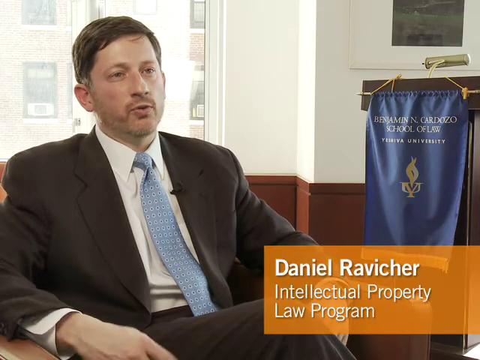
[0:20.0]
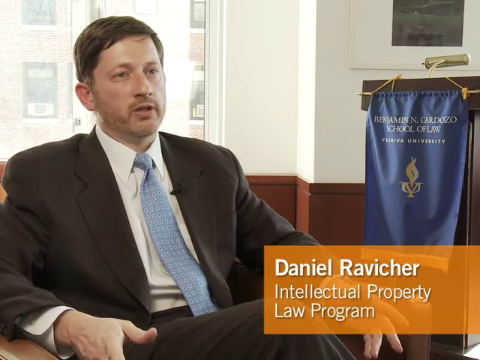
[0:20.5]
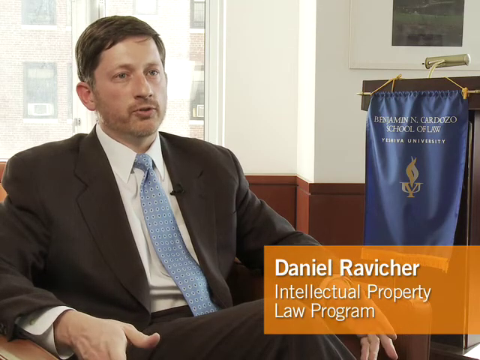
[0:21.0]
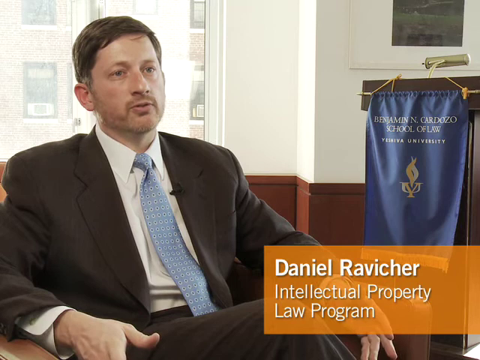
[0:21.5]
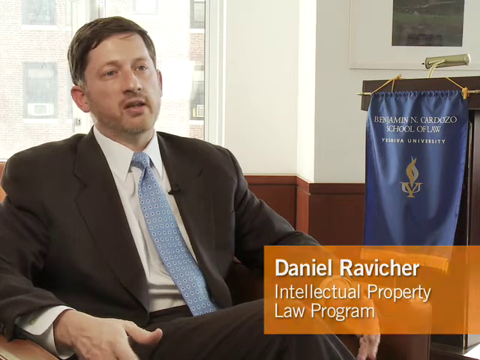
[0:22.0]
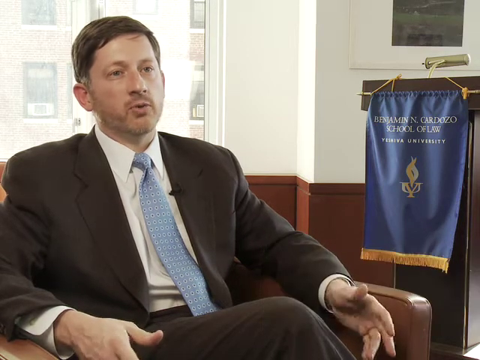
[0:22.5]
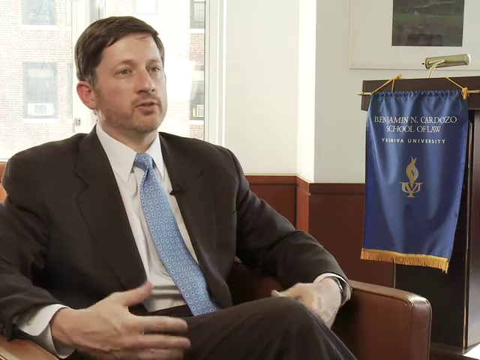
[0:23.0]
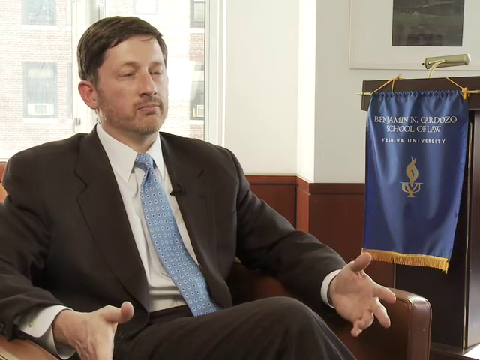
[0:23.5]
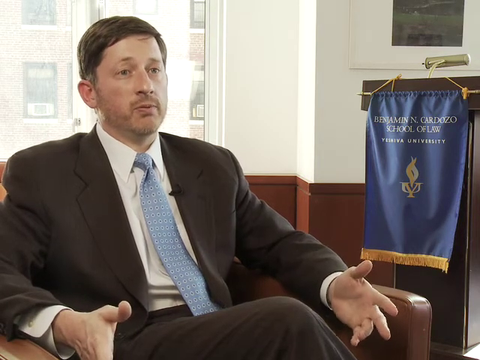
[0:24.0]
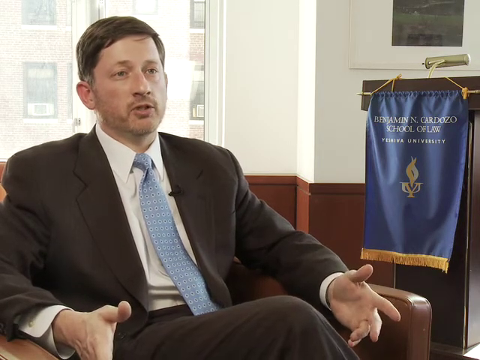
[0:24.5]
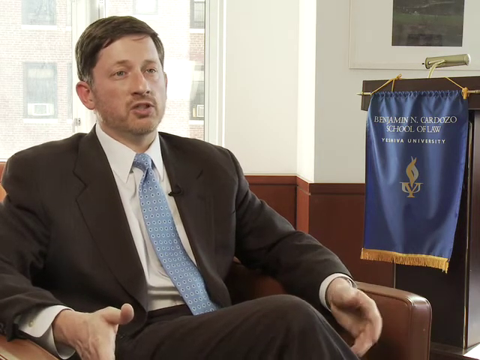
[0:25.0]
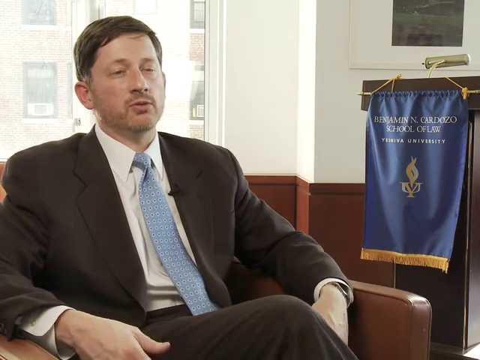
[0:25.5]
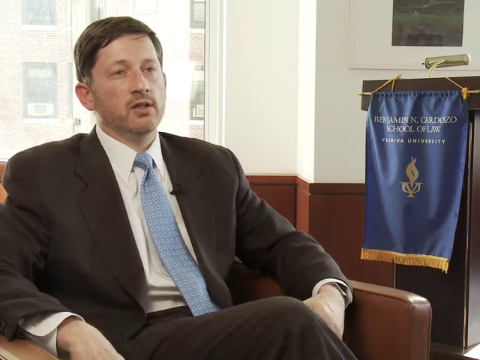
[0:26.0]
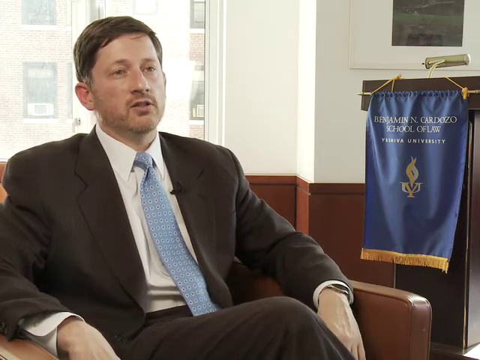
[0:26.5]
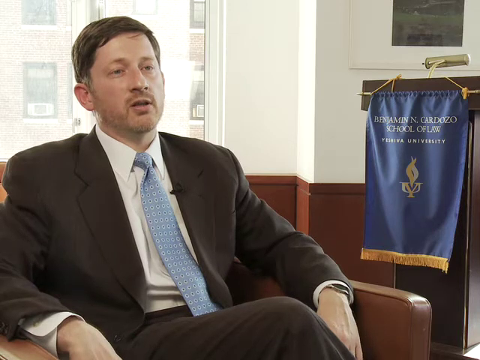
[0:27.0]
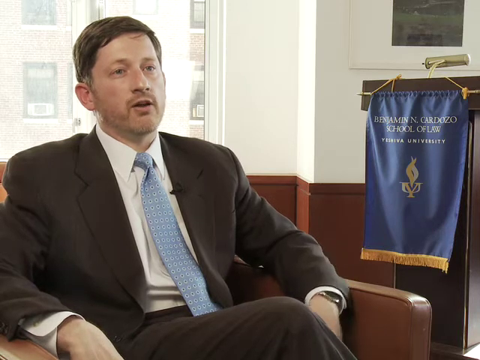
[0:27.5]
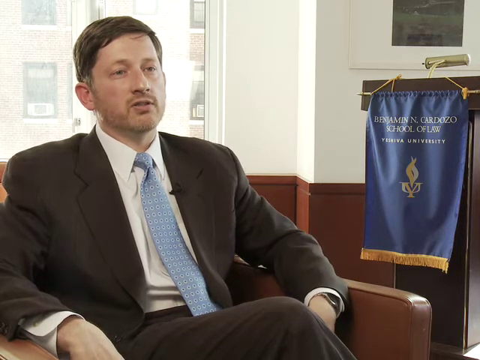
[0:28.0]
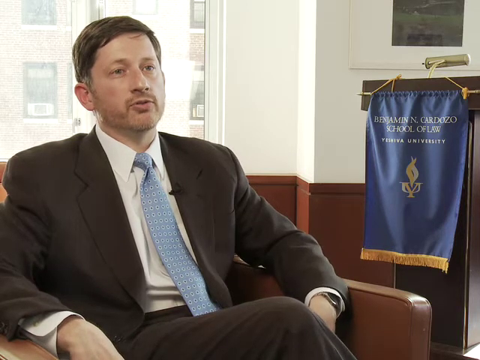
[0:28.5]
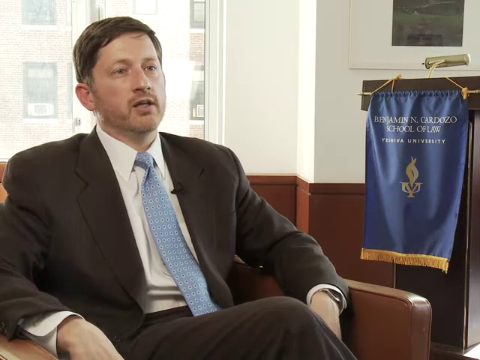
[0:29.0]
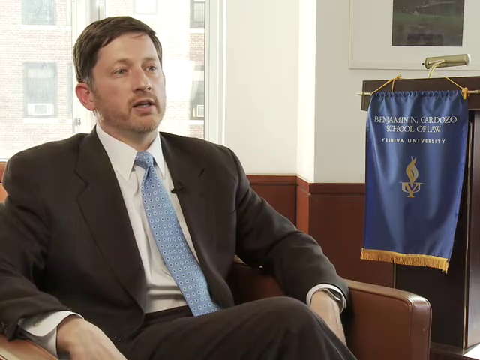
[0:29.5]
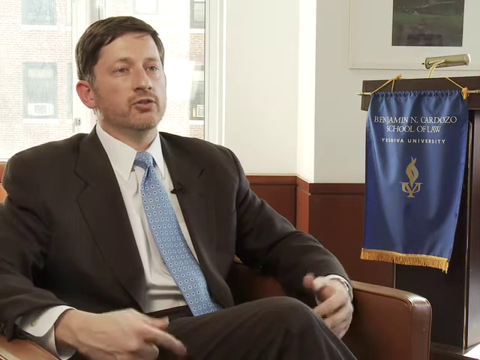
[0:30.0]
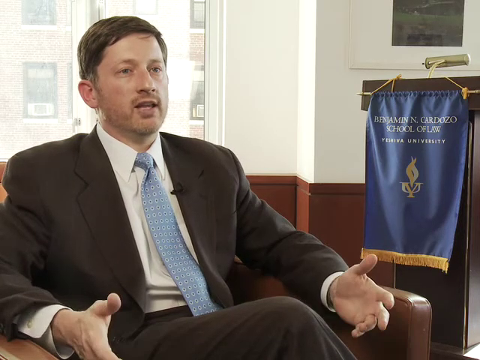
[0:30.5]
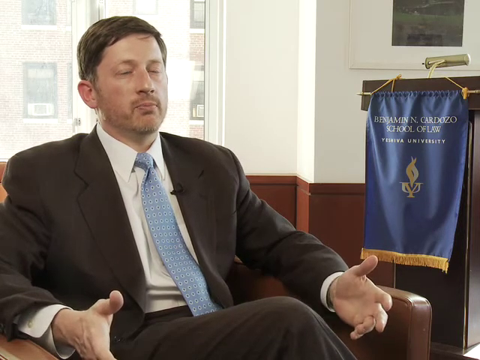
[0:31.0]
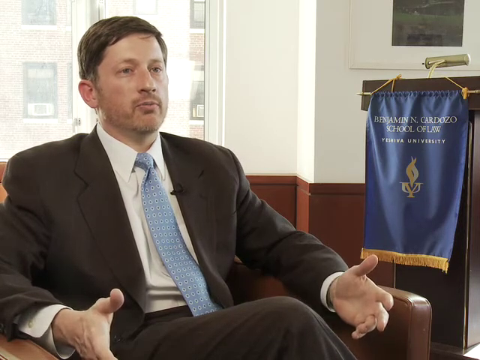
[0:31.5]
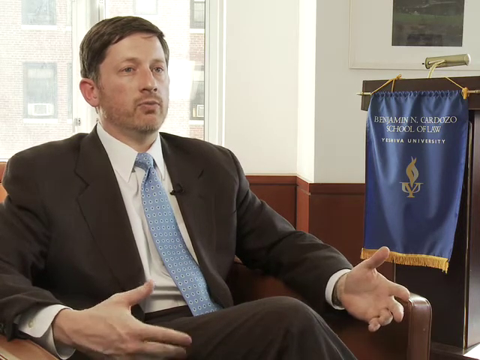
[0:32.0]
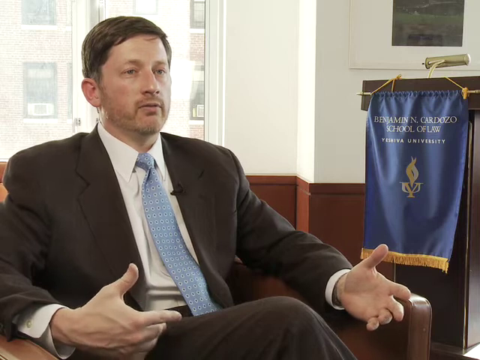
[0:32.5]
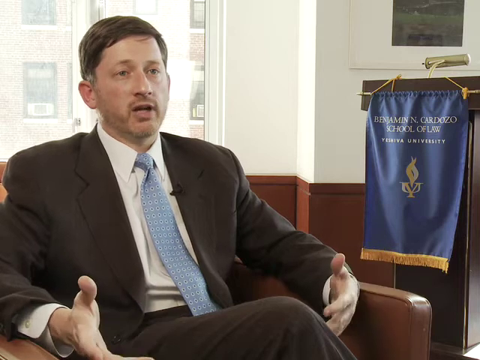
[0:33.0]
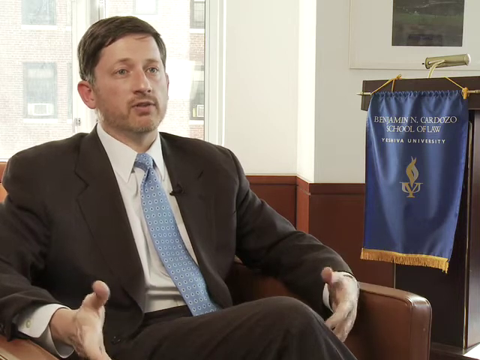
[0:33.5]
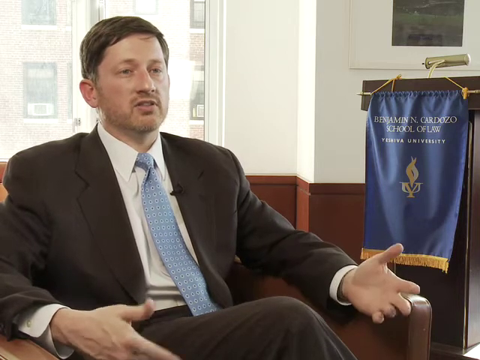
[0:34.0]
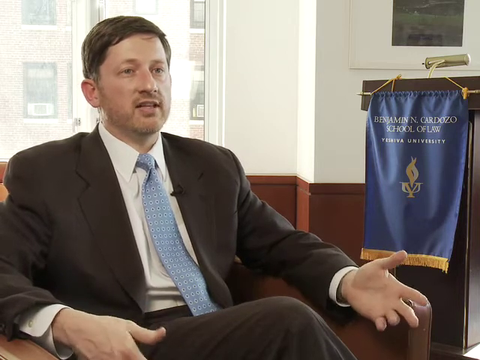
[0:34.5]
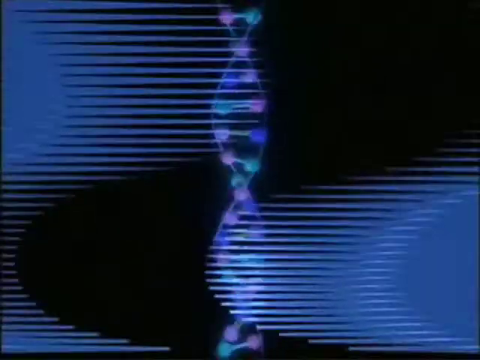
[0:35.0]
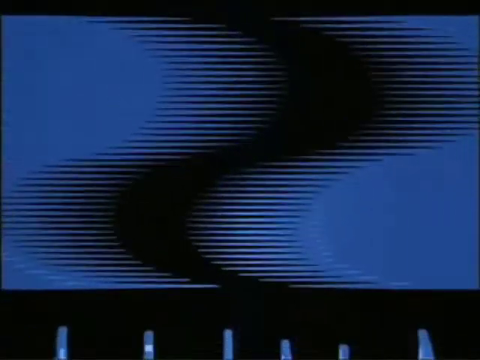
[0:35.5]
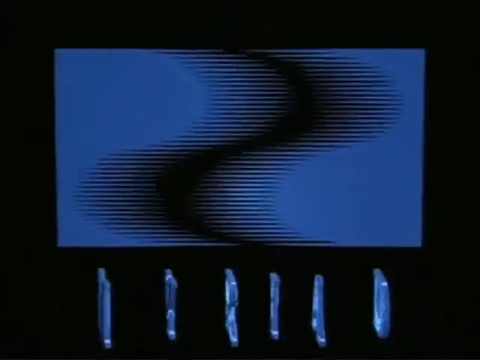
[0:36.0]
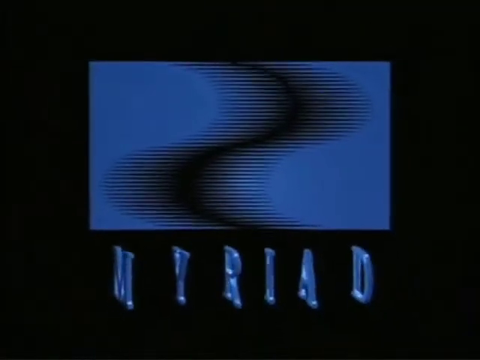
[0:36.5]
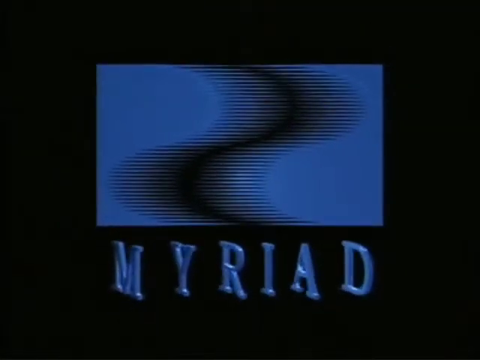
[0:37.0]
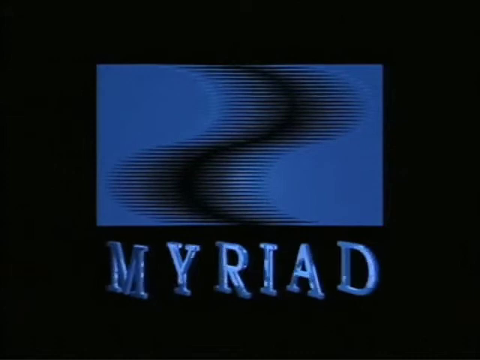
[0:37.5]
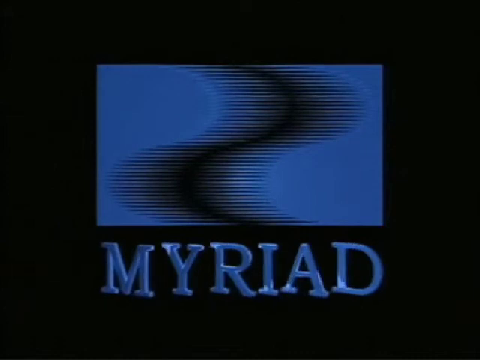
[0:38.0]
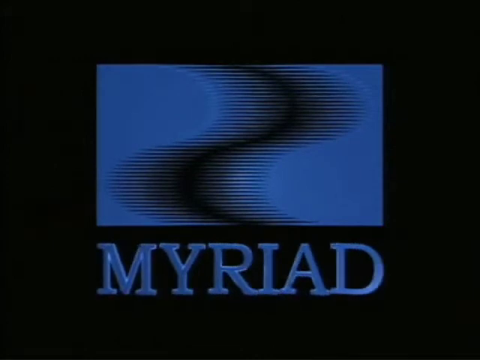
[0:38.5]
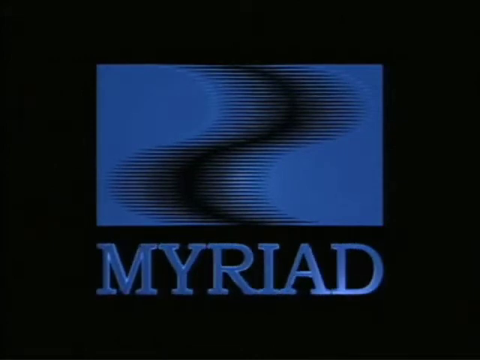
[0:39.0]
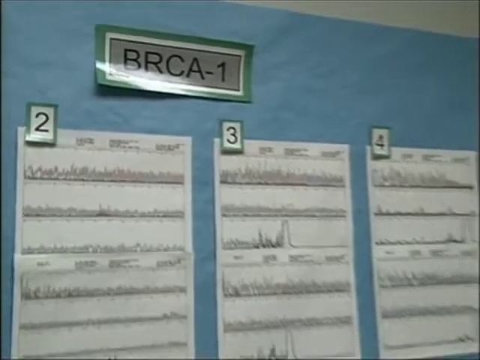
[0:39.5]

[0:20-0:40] A man being interviewed is on the left-hand side, sitting in a chair and facing somewhere around maybe five o'clock. His leg is visible along the bottom. He wears a black suit, a white dress shirt and a light blue tie, is probably in his 30s, maybe 40s, and has medium-length brown hair and a five o'clock shadow. In the lower right, a semi-transparent orange rectangle contains white letters reading "Daniel Ravitcher, Intellectual Property Law Program." Behind him to the right stands a podium facing somewhere around seven o'clock. He keeps a very neutral expression and gestures left and right with his hands. The screen then switches to black, with the word "MYRIAD" in medium blue capital letters at the bottom. Above it is a logo: a blue rectangle in the same blue, containing a backwards S with black streaks coming off its left and right, kind of simulating a blur. The video then goes to another screen.